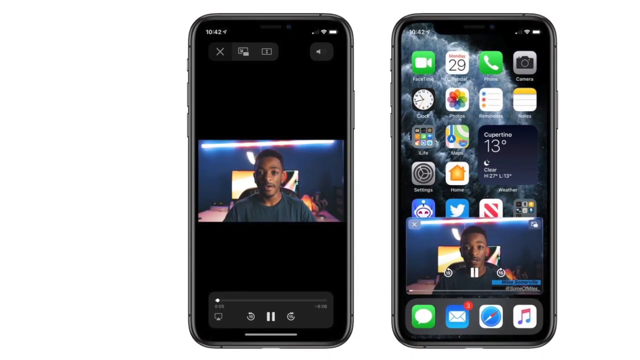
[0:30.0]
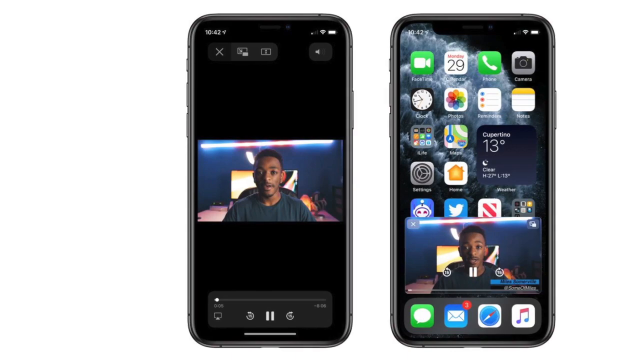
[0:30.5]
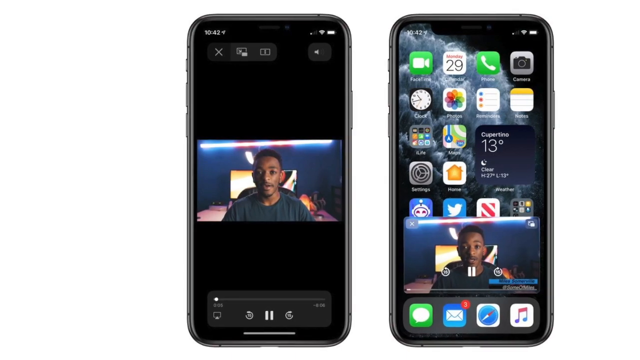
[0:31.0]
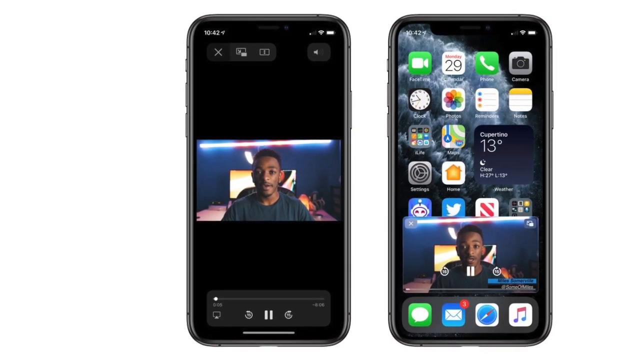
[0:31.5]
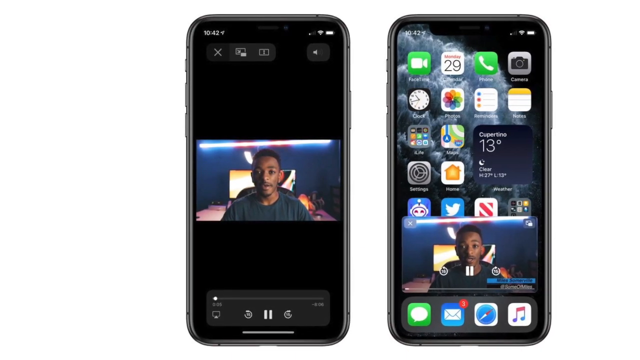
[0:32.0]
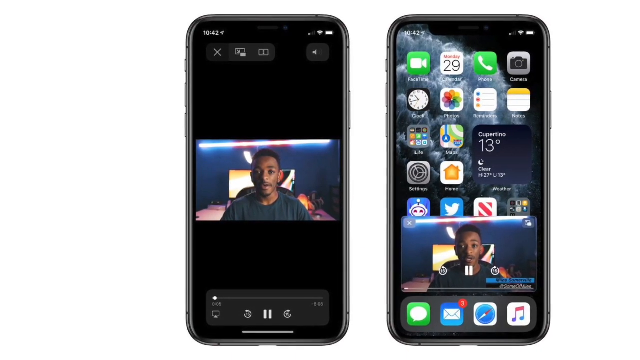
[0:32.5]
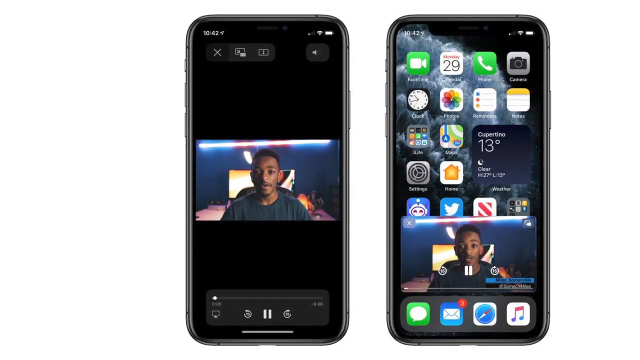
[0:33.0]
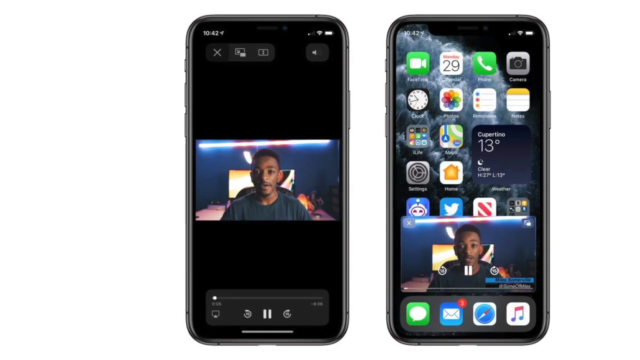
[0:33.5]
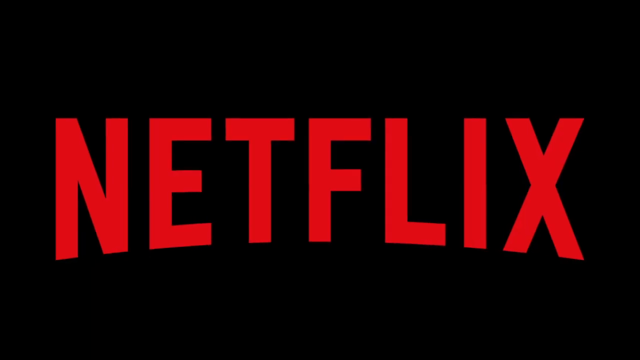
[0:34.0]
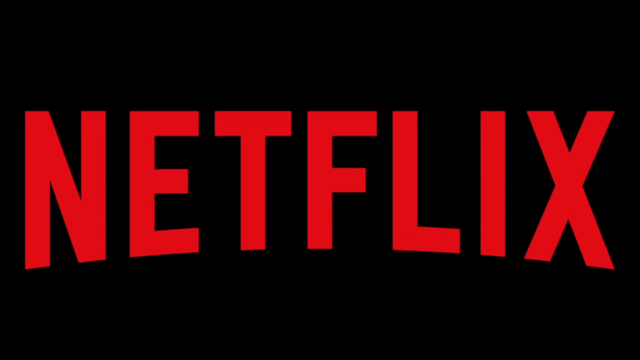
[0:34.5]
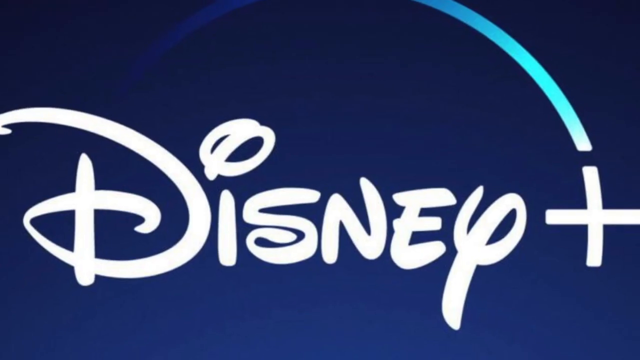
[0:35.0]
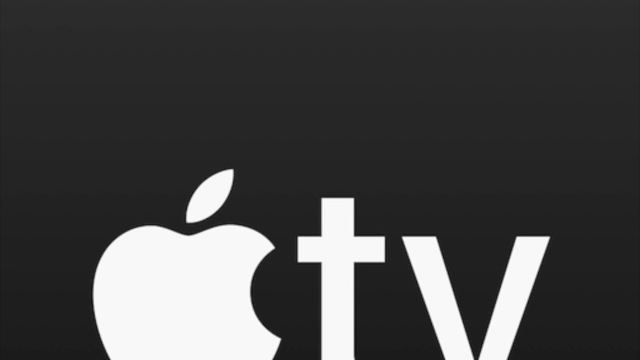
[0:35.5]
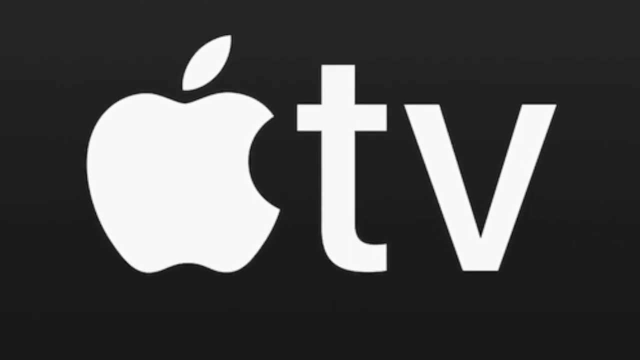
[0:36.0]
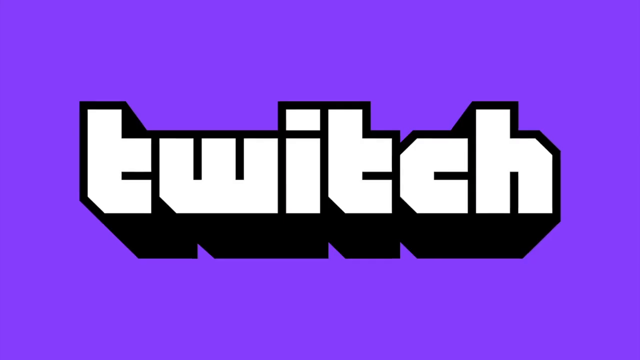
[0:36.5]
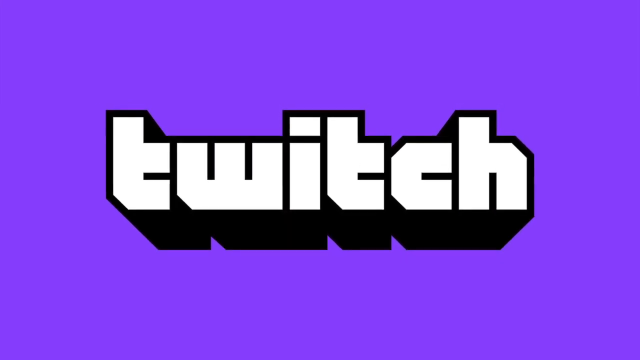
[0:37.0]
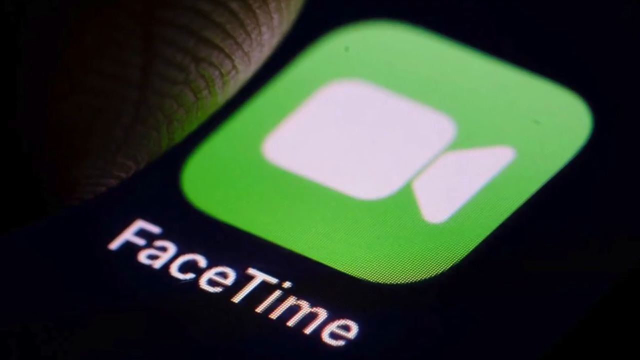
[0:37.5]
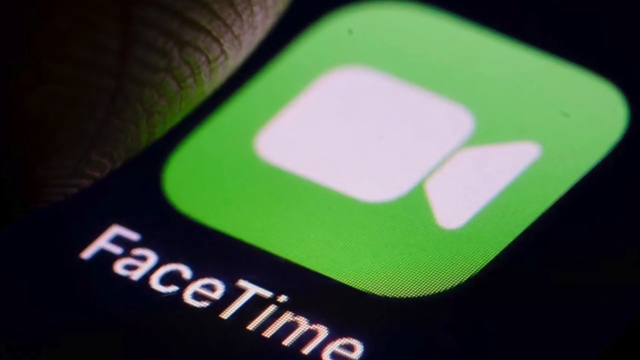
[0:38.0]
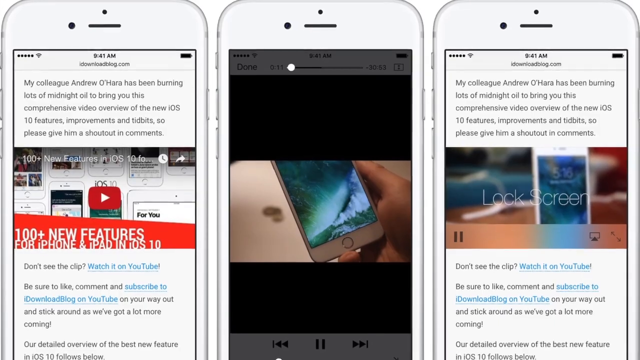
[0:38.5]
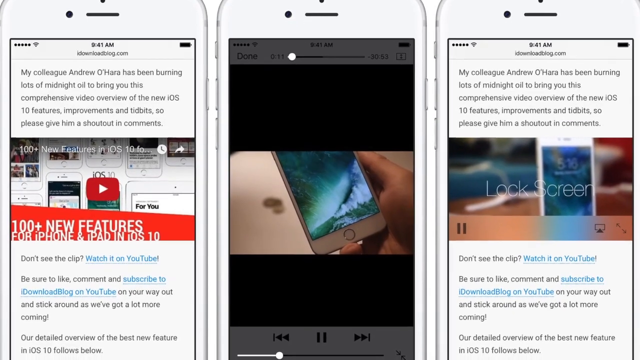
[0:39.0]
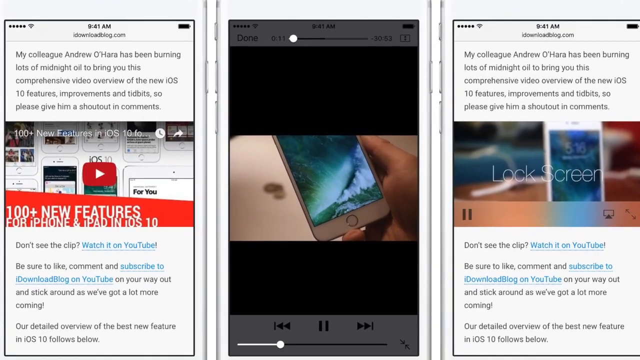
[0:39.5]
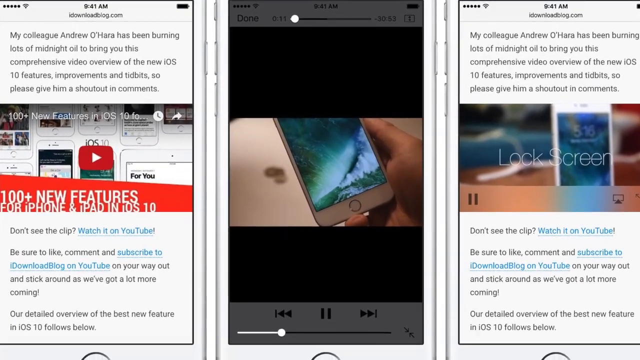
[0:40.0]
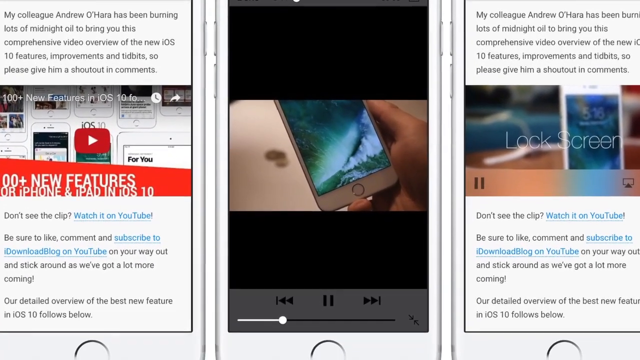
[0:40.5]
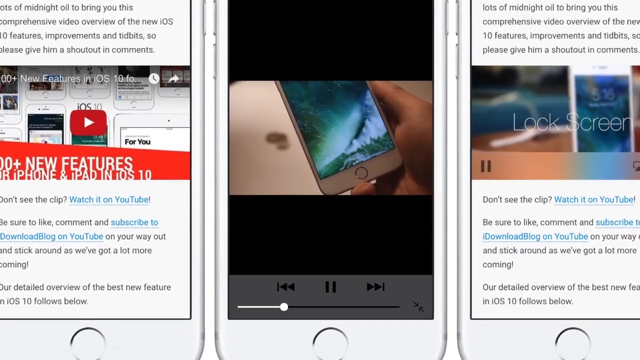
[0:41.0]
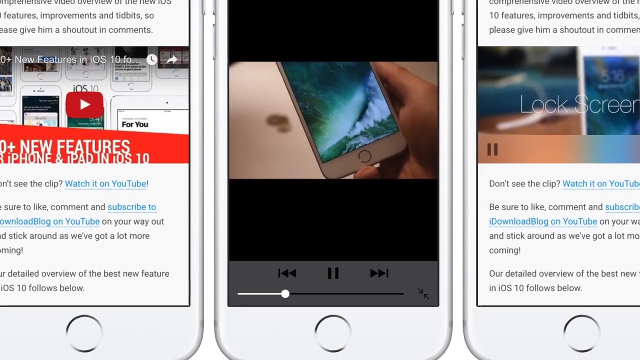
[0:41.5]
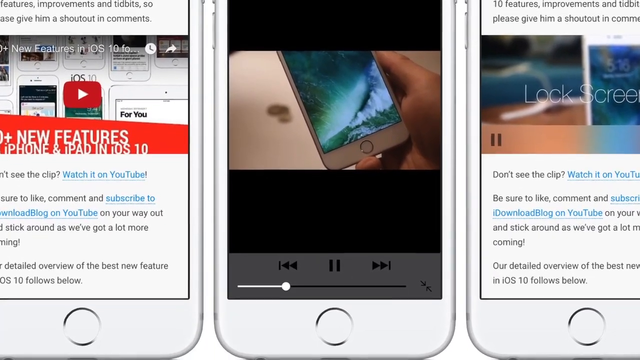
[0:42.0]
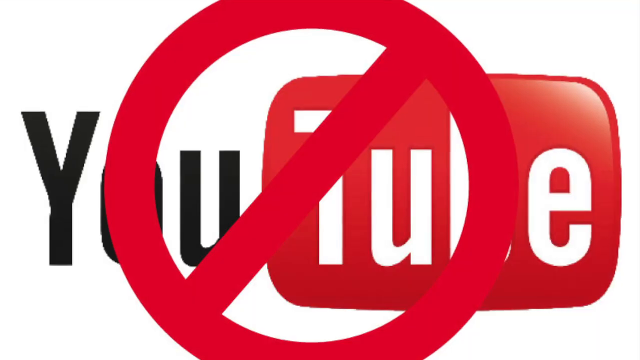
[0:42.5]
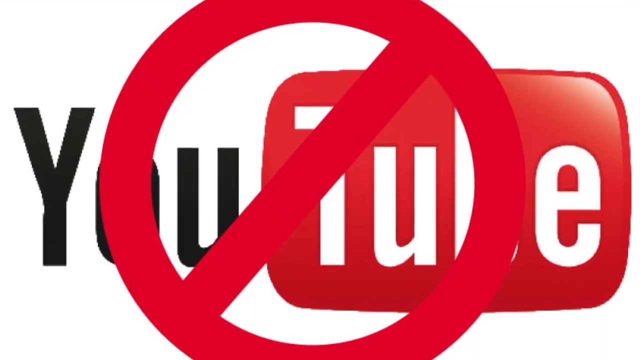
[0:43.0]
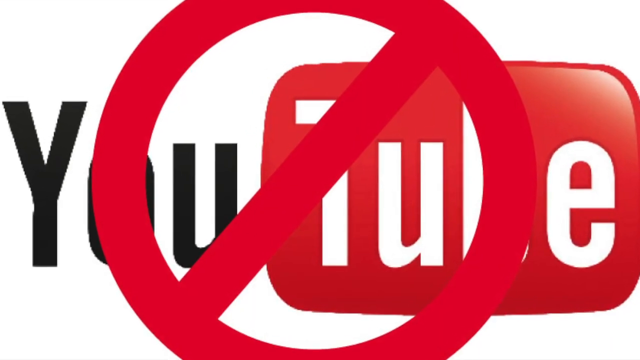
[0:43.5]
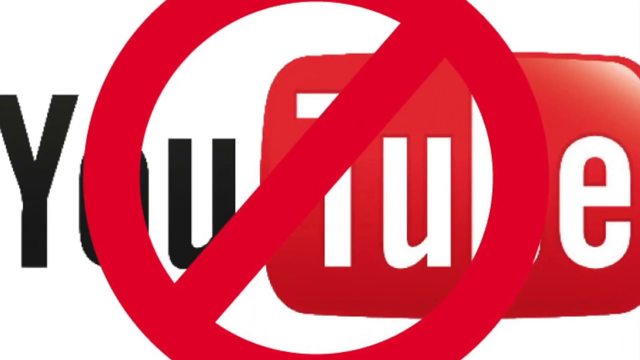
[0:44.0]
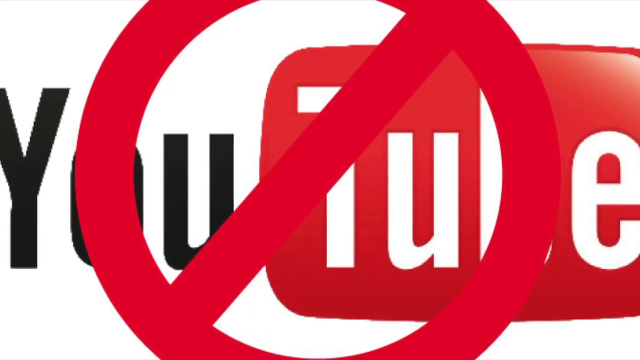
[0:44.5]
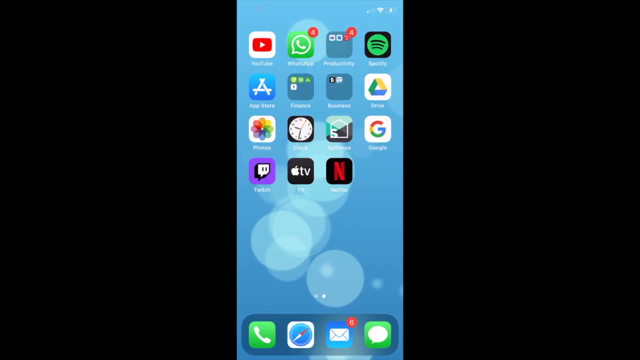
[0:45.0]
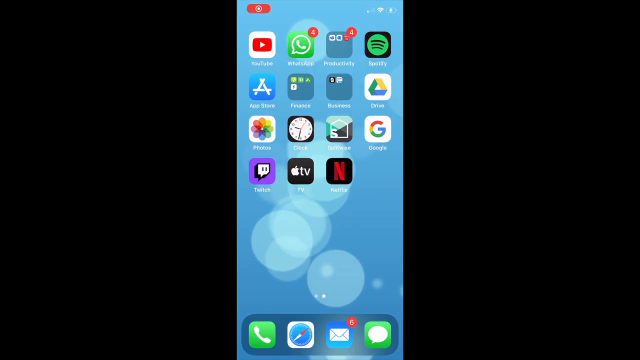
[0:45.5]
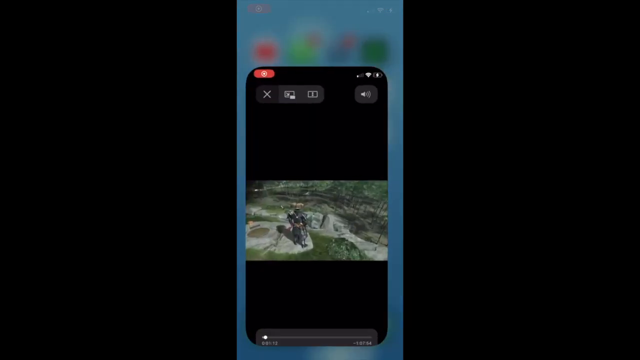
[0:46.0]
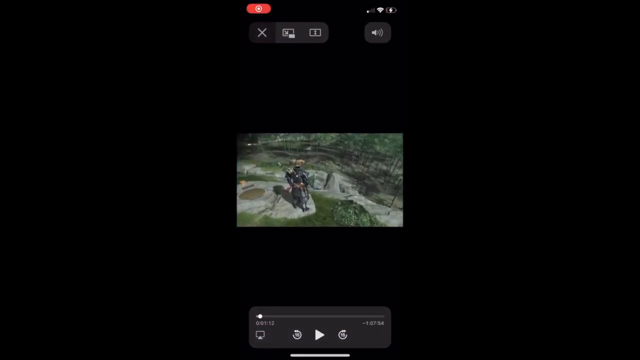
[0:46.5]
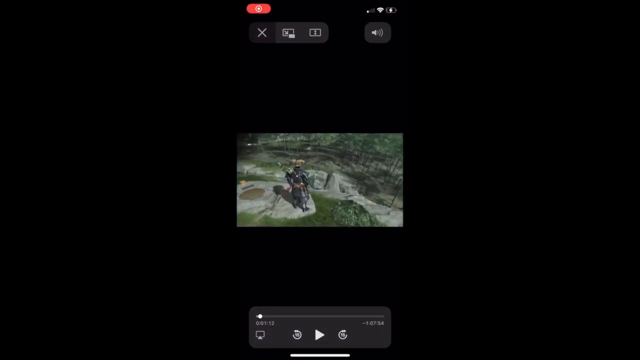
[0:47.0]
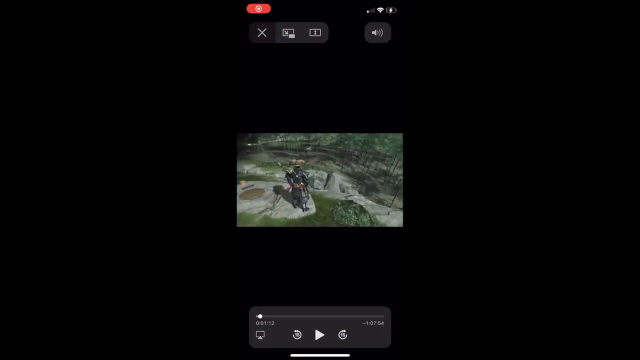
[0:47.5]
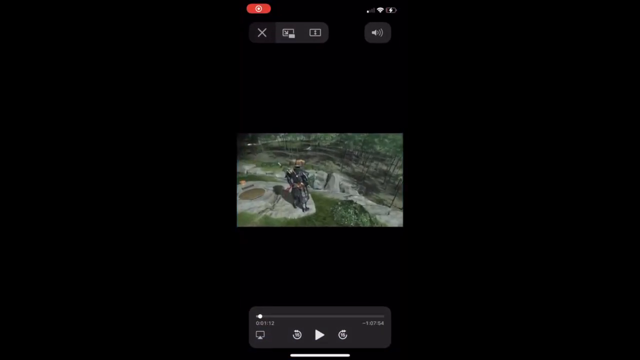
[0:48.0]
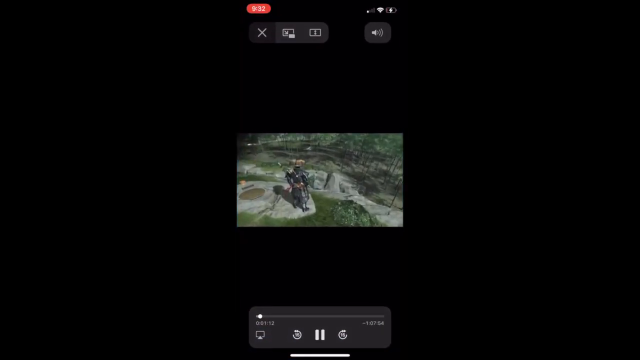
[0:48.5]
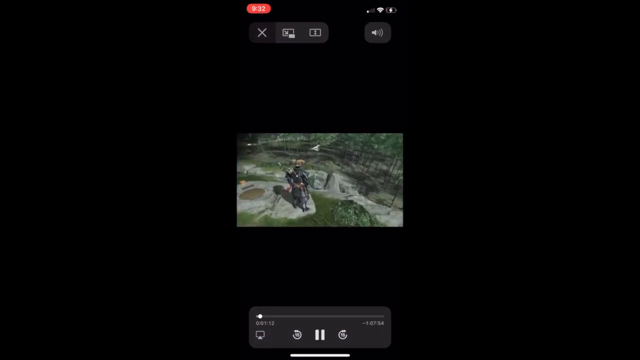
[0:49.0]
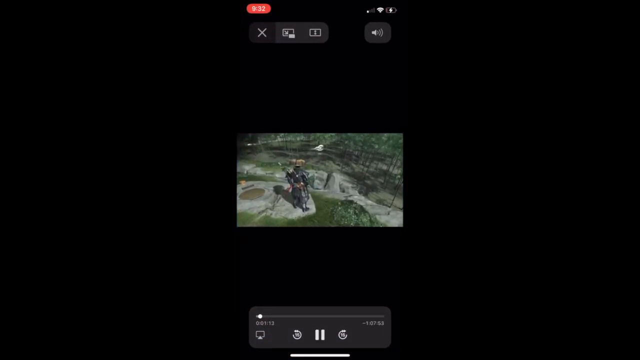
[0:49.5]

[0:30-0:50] The two iPhones remain on screen as the camera very slowly pans to the right. The screen then turns black and red Netflix text appears in the center, zooming in. Once it stops moving, the Disney Plus logo appears, with a gradient from dark bluish to lighter blue behind the text. That disappears and the Apple TV logo comes up from the bottom of the screen. Once it reaches the top, the screen switches to a Twitch text logo on a purple background. Next comes a close-up of an iPhone with the FaceTime application filling most of the screen, the word FaceTime below it, and someone's thumb about to tap the app. The view zooms into this, then switches to an image of three iPhones. The left one shows an article and a video about 100 plus new features for iPhone, iPad, and iOS 10; the center one shows an opened video of someone's hand holding an iPhone; the right one shows another article with a video that is not playing yet, with "lock screen" on it. The view zooms into the bottom of the center iPhone, where the play button is visible. The screen then switches to a YouTube logo with a crossed-out circle. Next comes a home screen with a blue background, and a video of someone playing a video game is opened. The video starts playing and slight movements are visible within it.